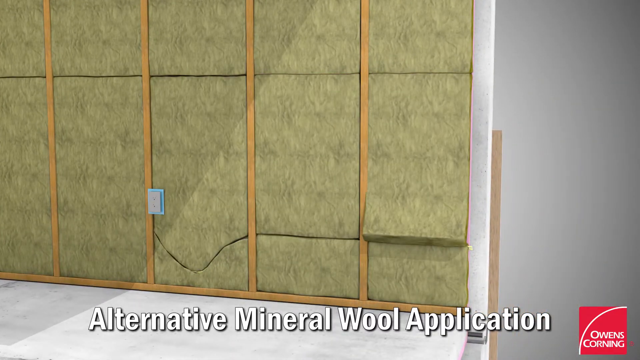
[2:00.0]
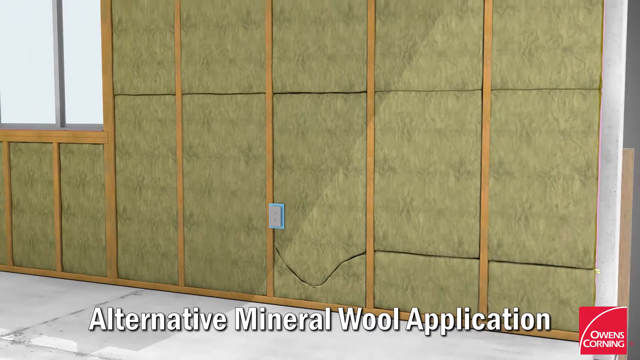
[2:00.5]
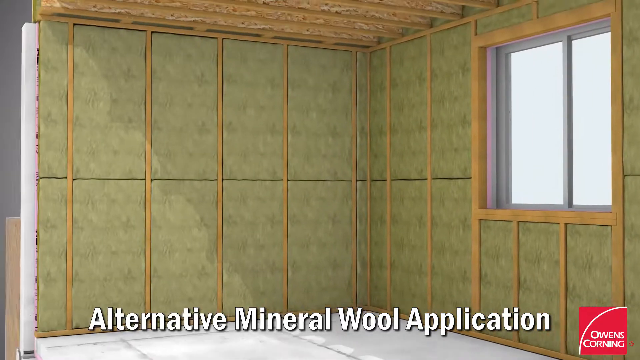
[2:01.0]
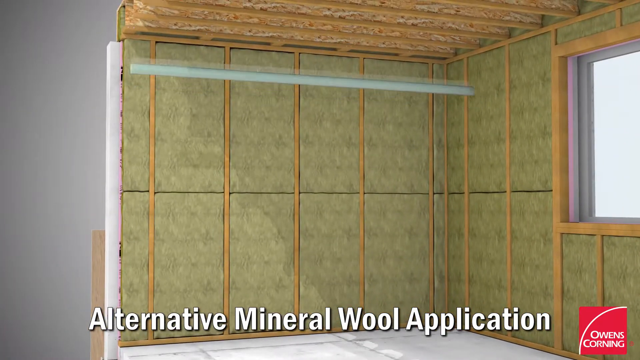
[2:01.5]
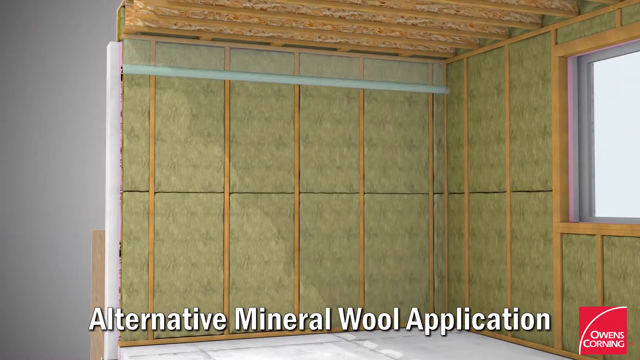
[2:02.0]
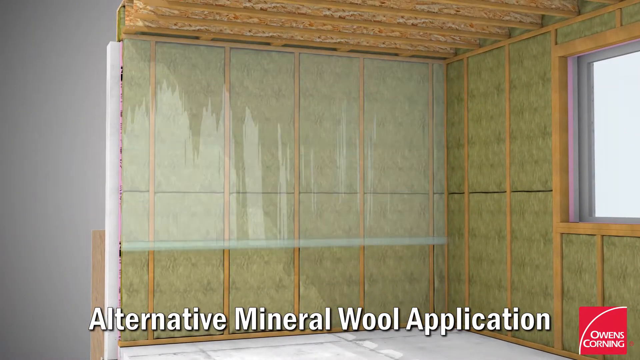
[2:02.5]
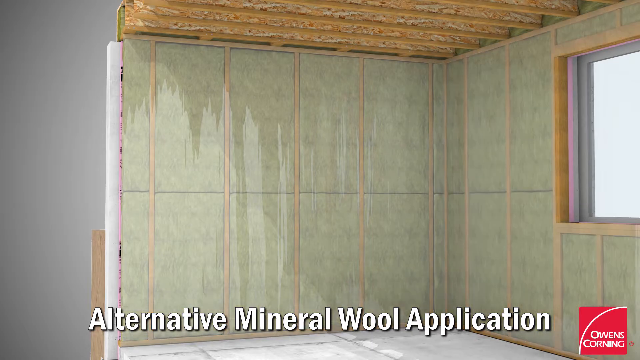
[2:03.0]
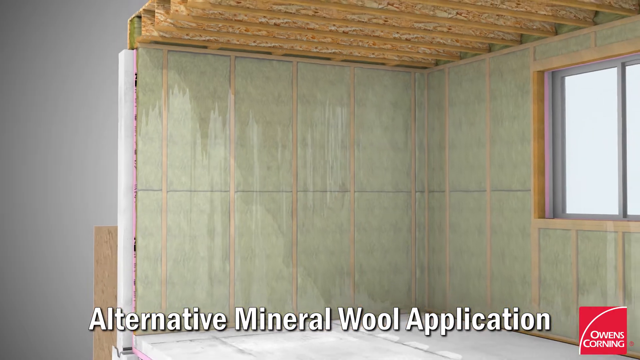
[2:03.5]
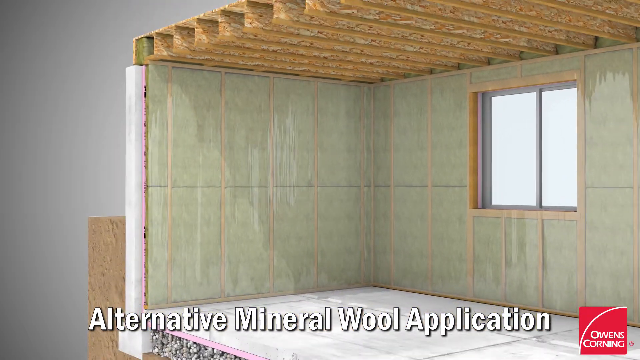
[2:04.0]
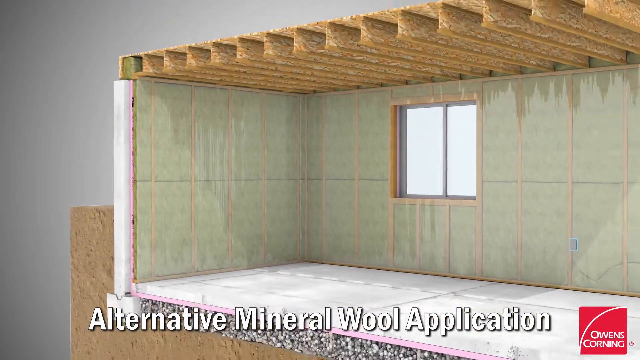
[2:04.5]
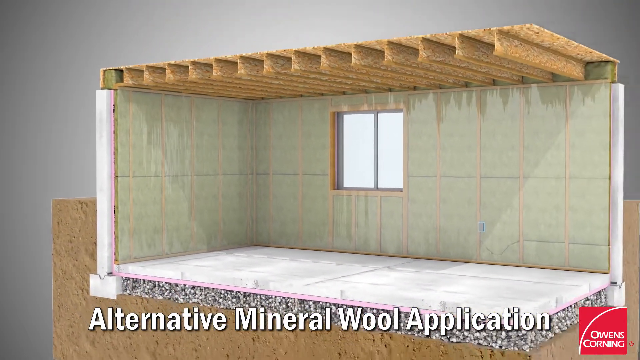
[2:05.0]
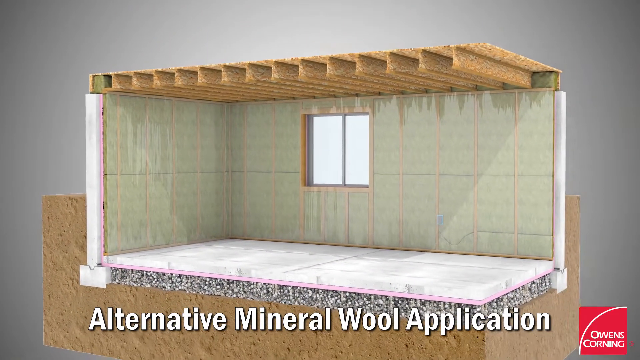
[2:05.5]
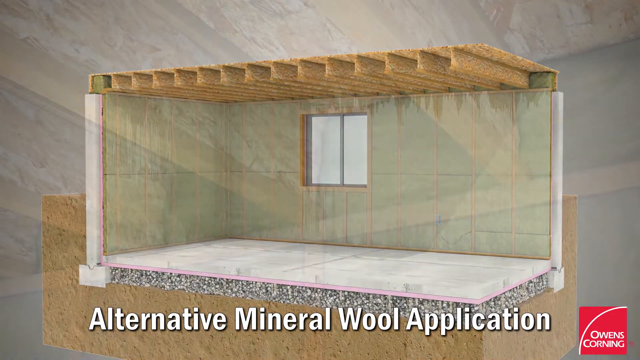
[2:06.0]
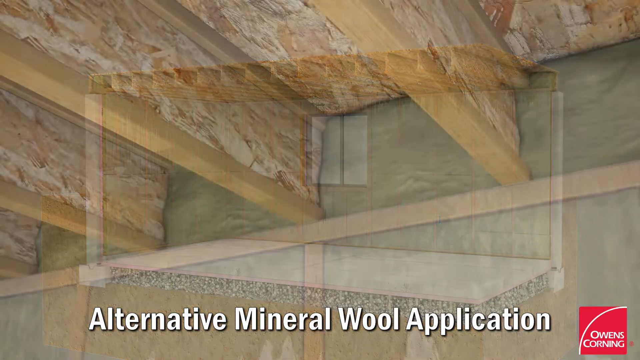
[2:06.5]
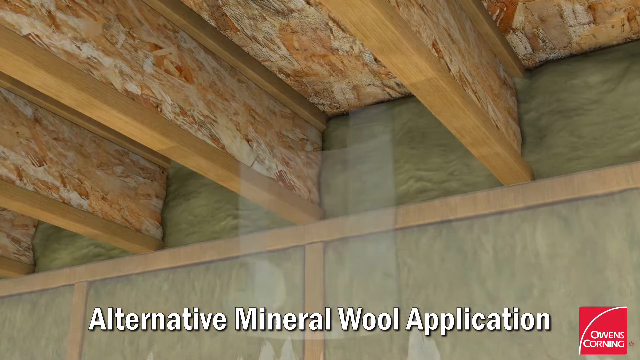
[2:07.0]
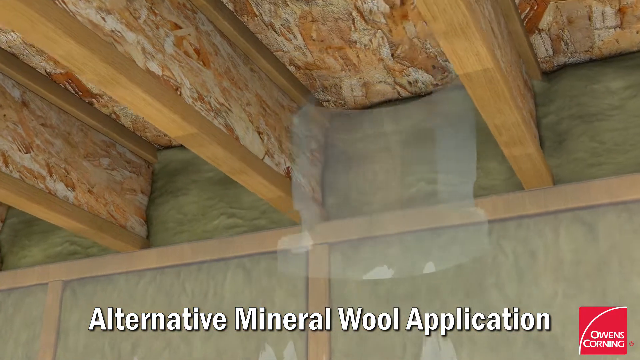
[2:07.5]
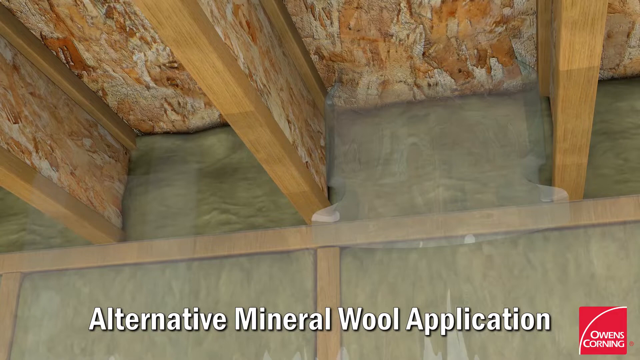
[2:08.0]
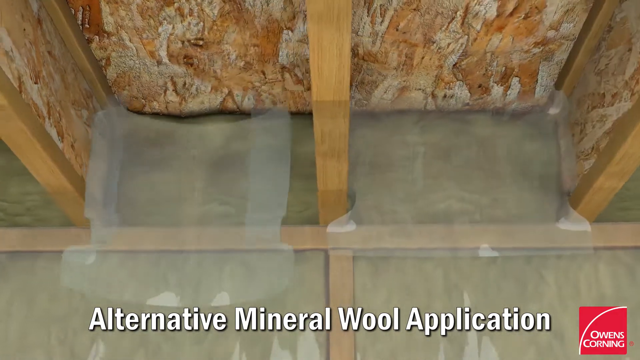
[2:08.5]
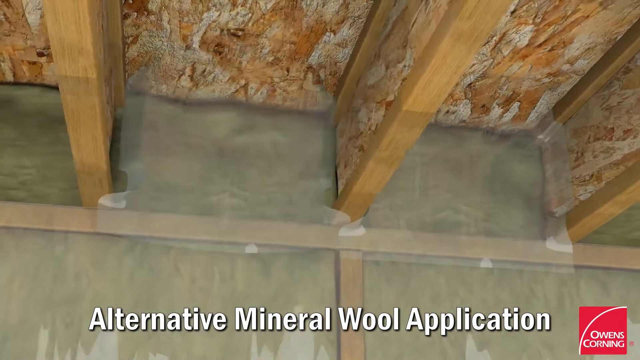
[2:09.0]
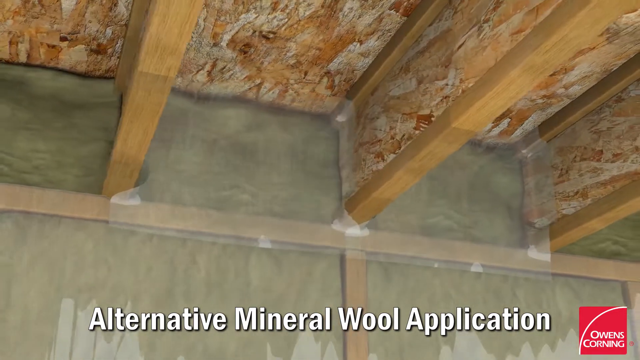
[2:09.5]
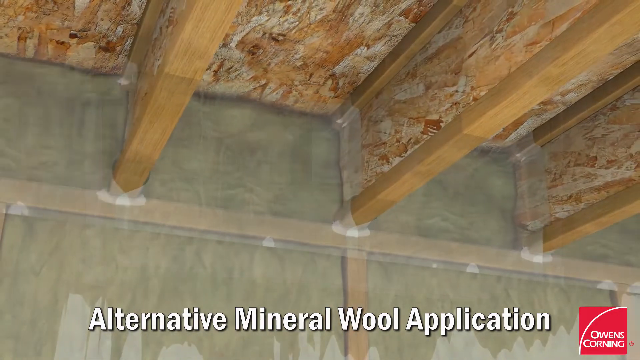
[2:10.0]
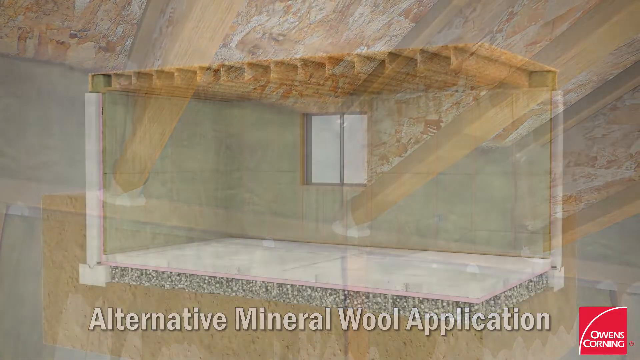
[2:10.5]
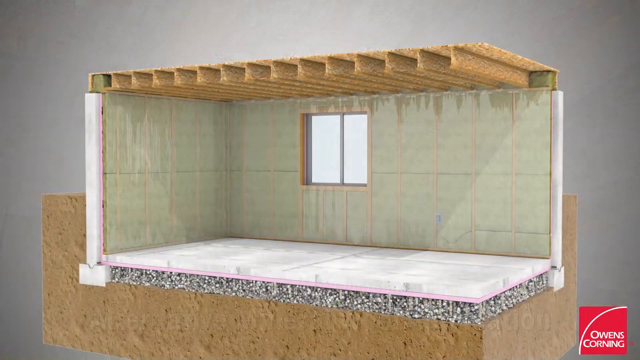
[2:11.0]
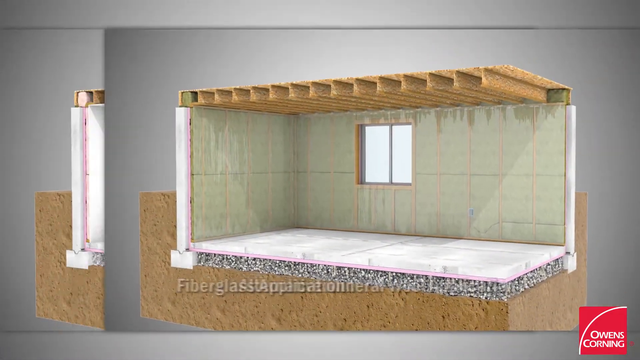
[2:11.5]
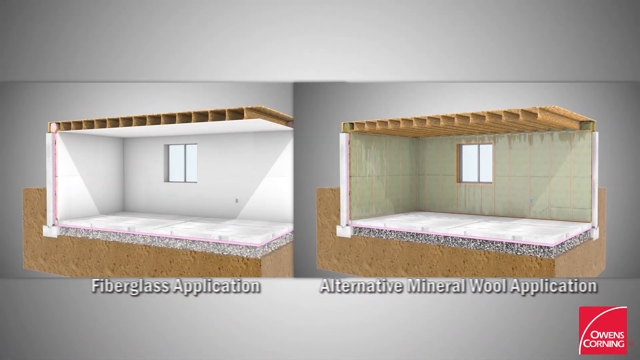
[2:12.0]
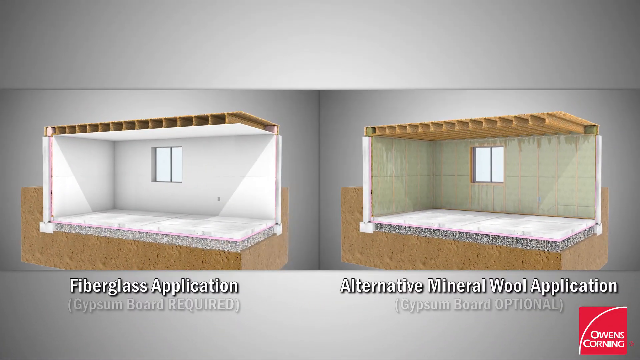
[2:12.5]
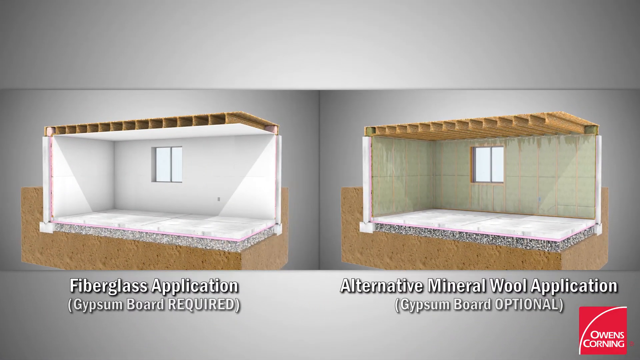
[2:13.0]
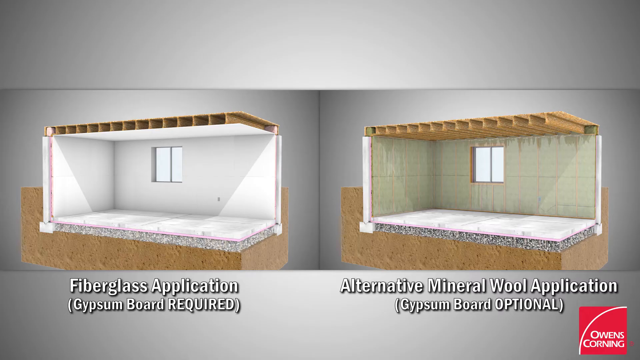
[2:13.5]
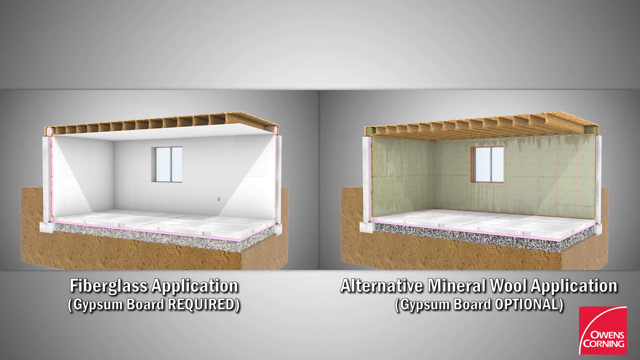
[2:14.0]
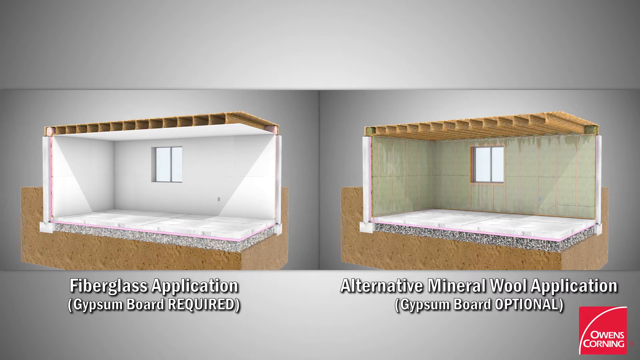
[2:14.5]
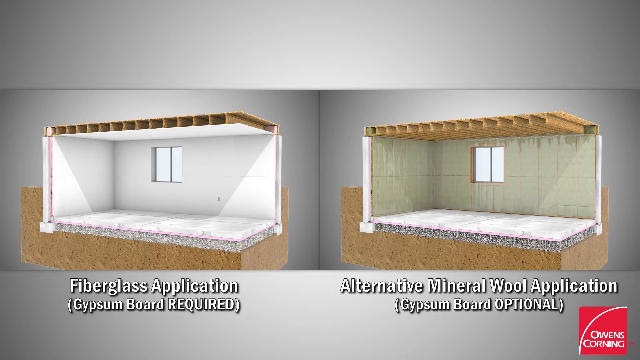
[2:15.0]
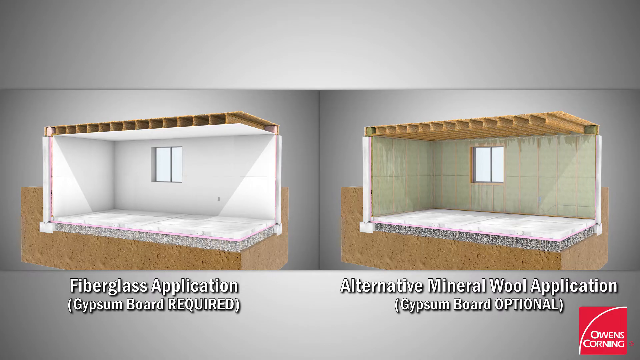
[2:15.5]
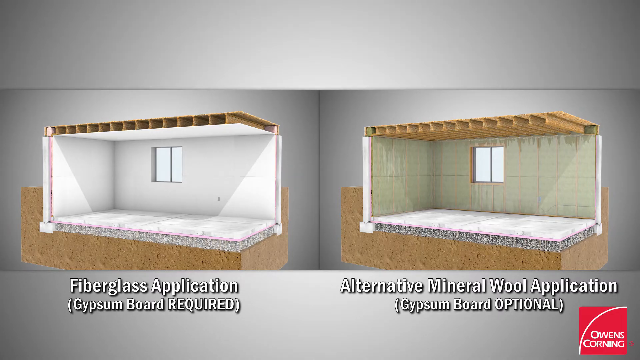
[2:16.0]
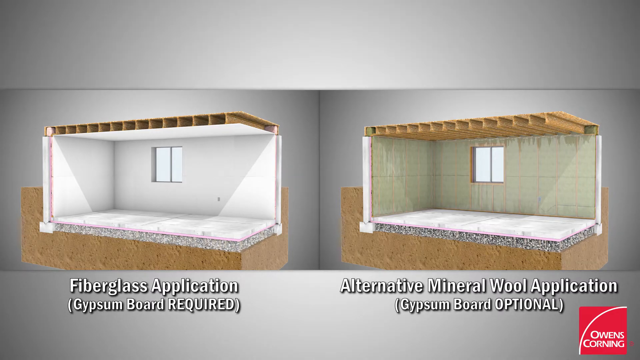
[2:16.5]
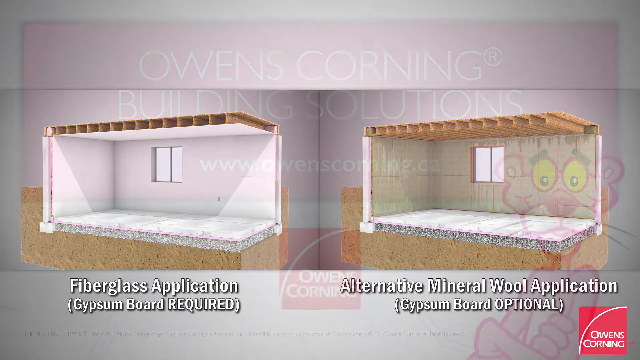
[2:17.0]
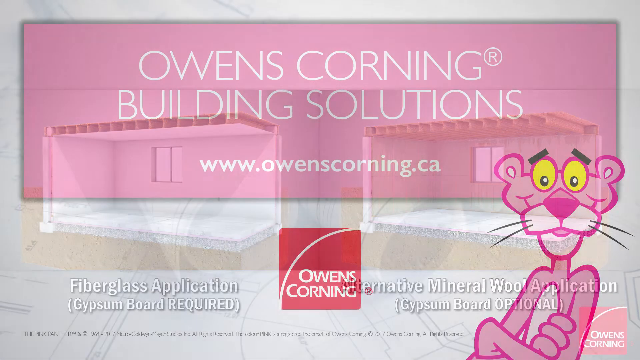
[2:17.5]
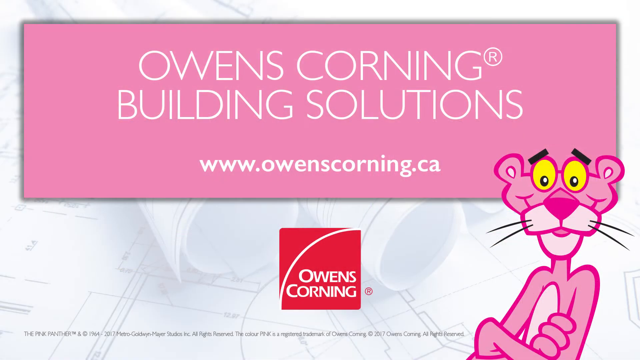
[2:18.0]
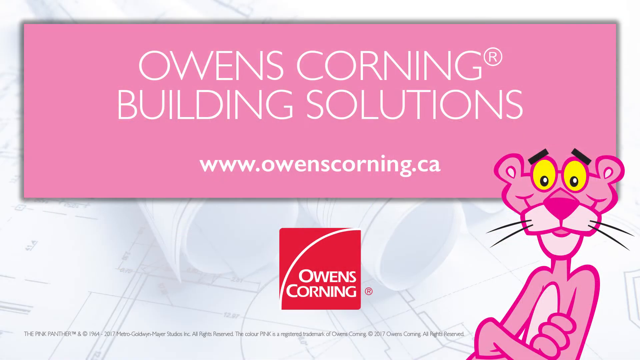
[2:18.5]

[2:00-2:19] Text reads "alternative mineral wool application." Inside a room, wooden joists are stuffed with a gray product between the beams, and a plastic membrane follows. A side-by-side of the same room appears, one white and one green, labeled "fiberglass application" and "alternative mineral wool application," apparently showing two different products. Text reads "Owens Corning Building Solutions" with a Pink Panther logo. A clear plastic membrane is put over the joists of the wall and ceiling framing, unraveled over the wall beams and then the ceiling, and the plastic sheeting is applied throughout. Everything is done in 3D rendering; it is a promotional video.